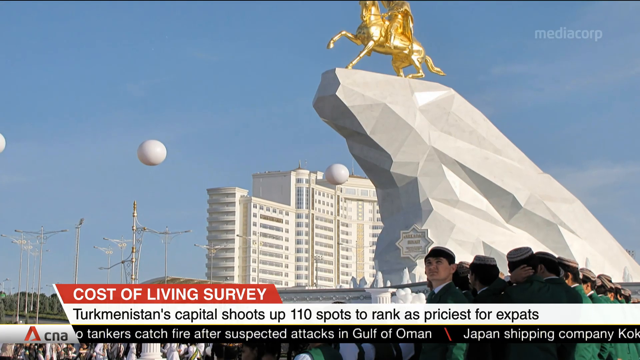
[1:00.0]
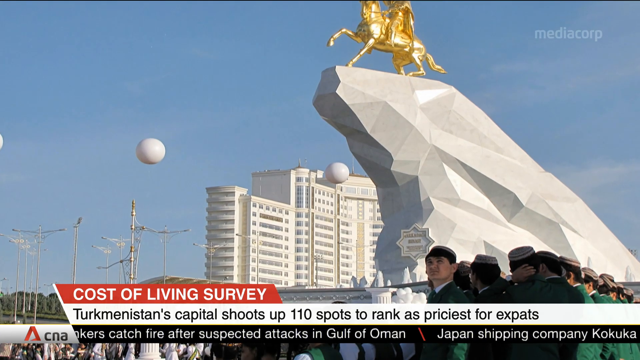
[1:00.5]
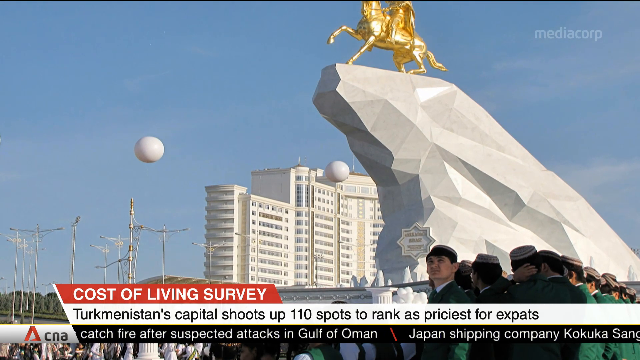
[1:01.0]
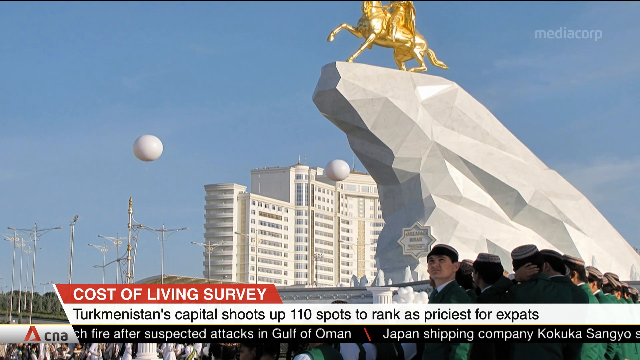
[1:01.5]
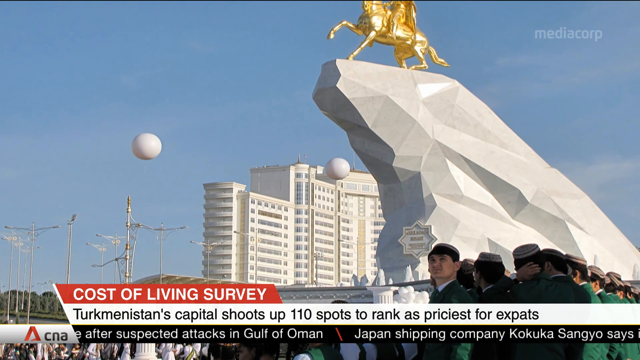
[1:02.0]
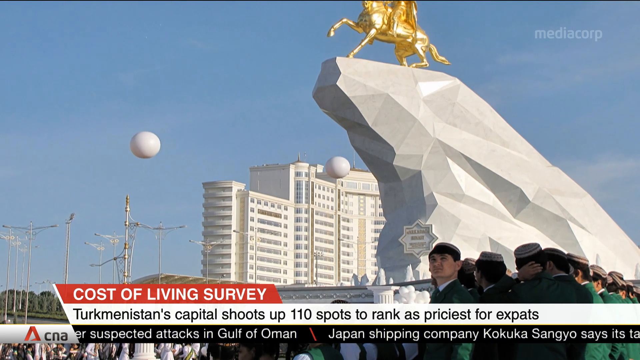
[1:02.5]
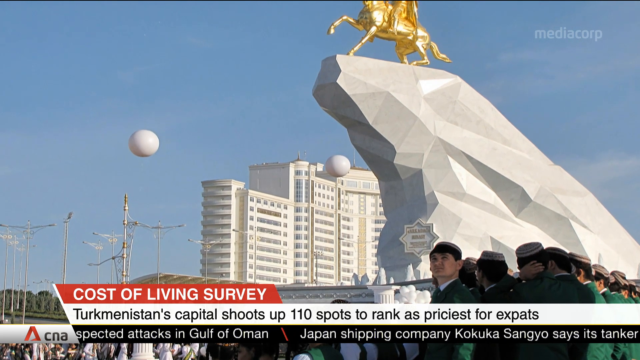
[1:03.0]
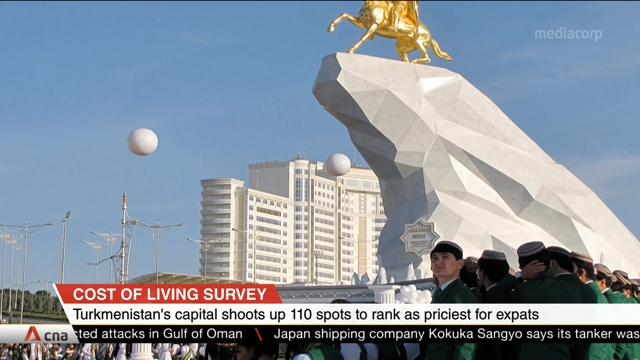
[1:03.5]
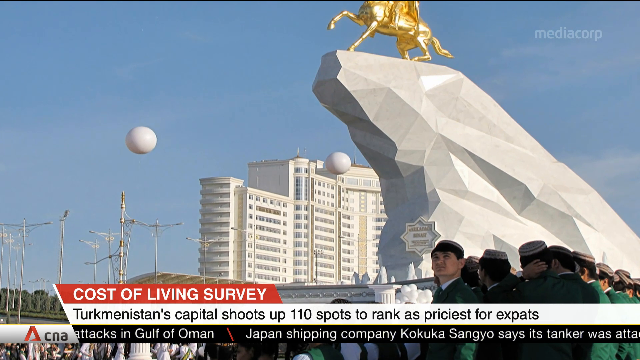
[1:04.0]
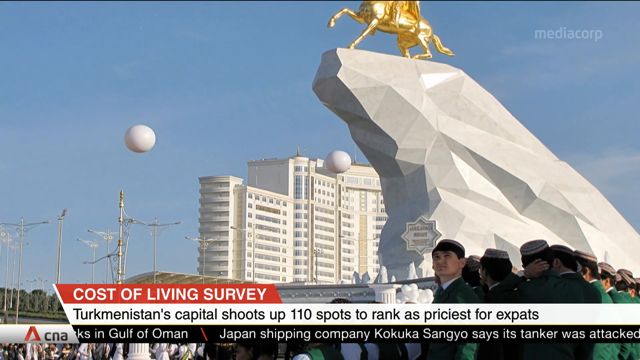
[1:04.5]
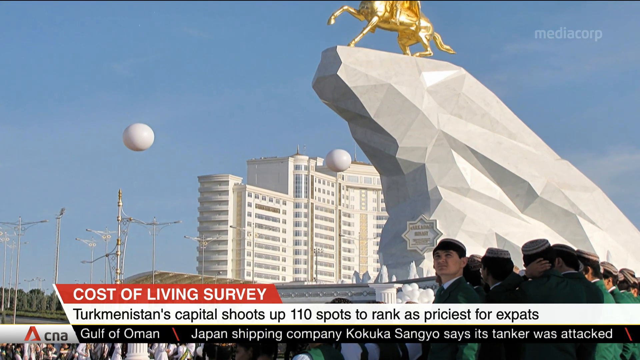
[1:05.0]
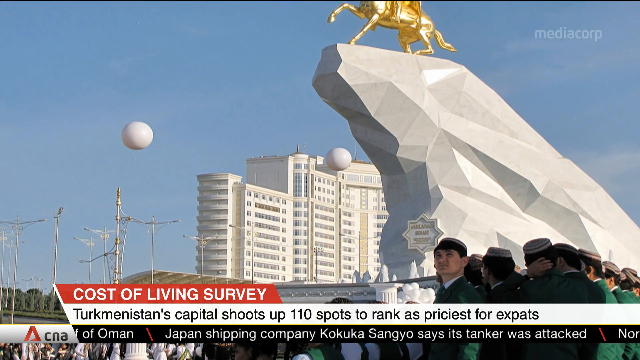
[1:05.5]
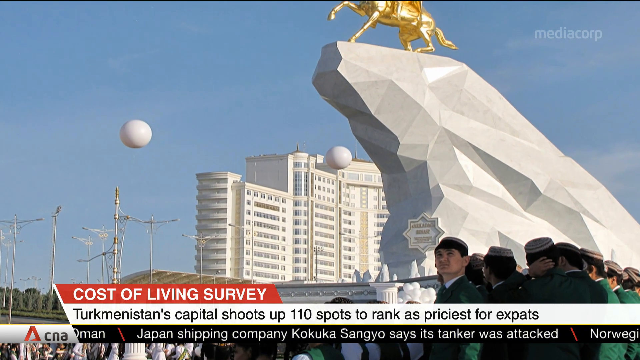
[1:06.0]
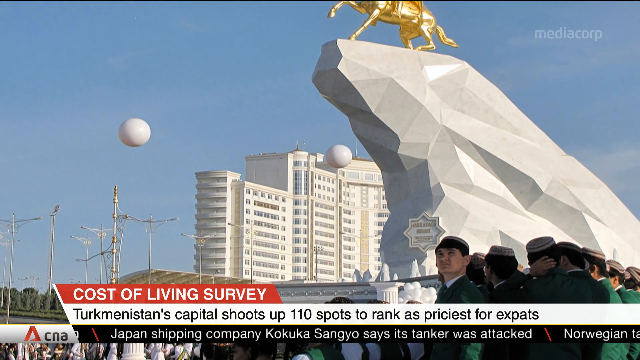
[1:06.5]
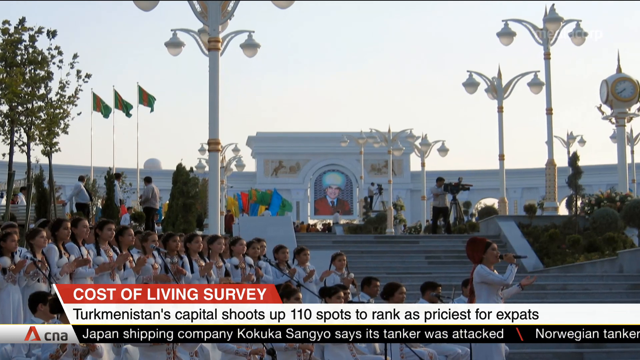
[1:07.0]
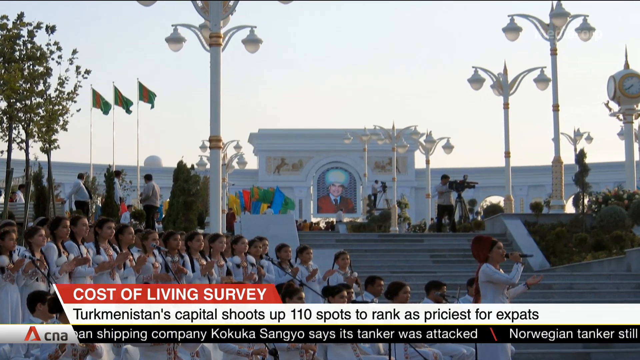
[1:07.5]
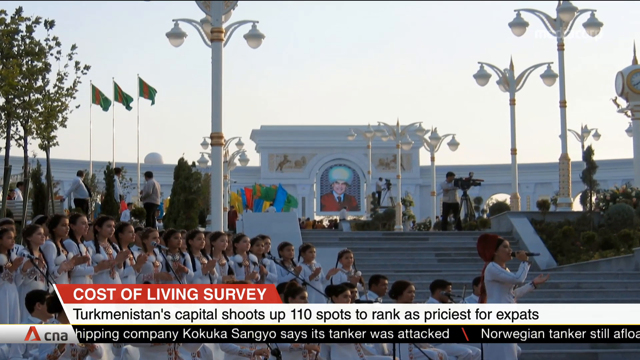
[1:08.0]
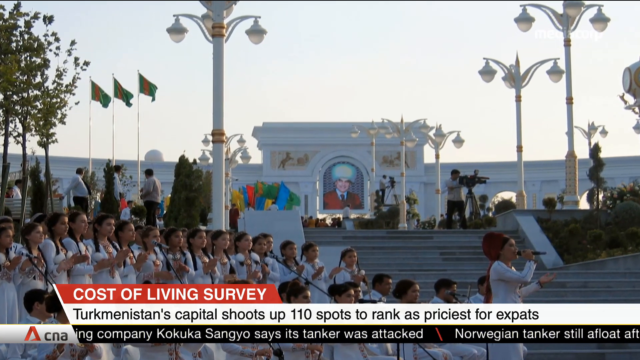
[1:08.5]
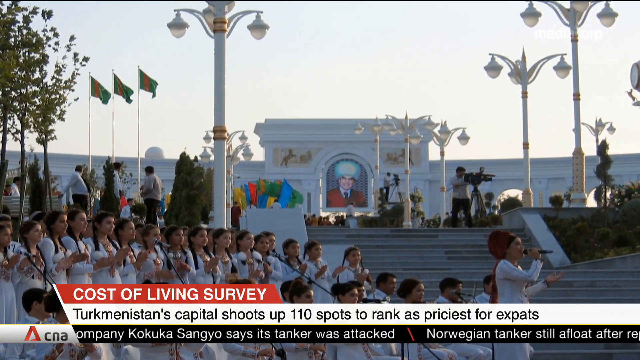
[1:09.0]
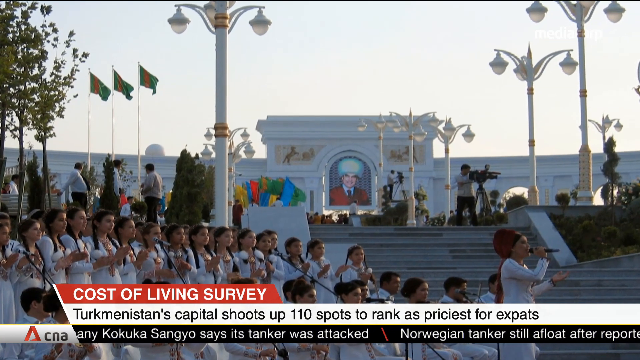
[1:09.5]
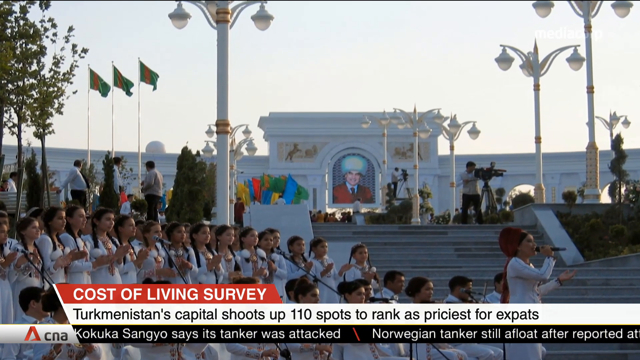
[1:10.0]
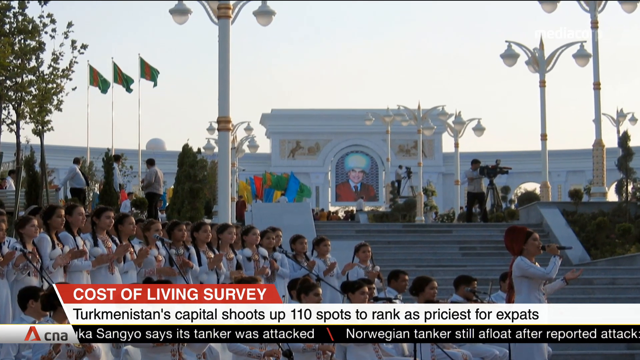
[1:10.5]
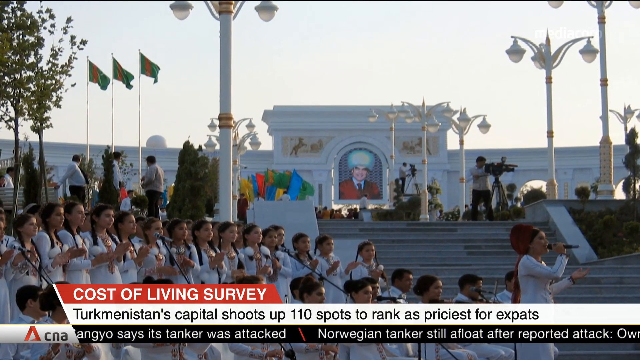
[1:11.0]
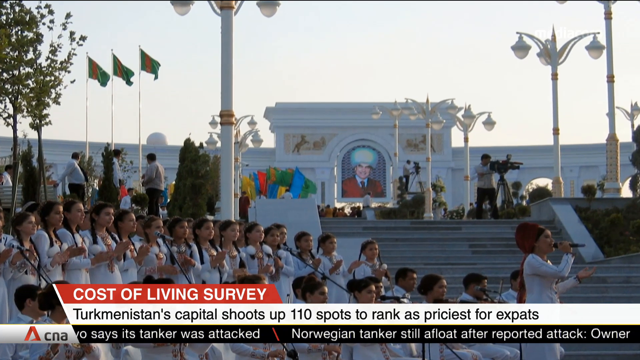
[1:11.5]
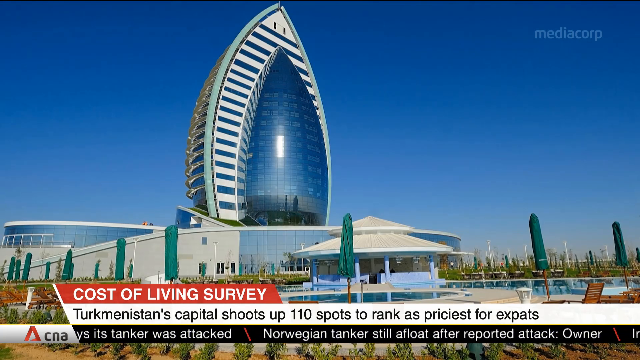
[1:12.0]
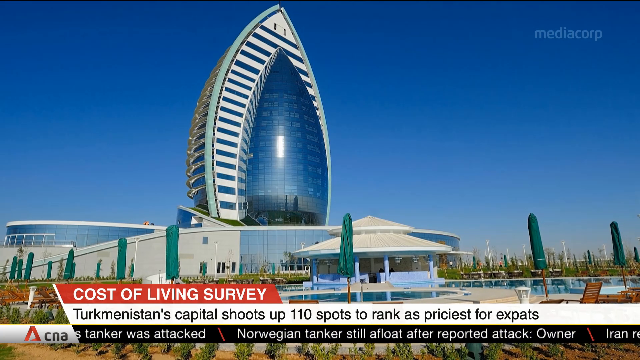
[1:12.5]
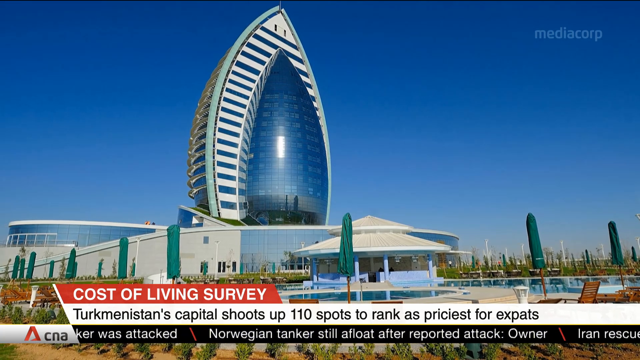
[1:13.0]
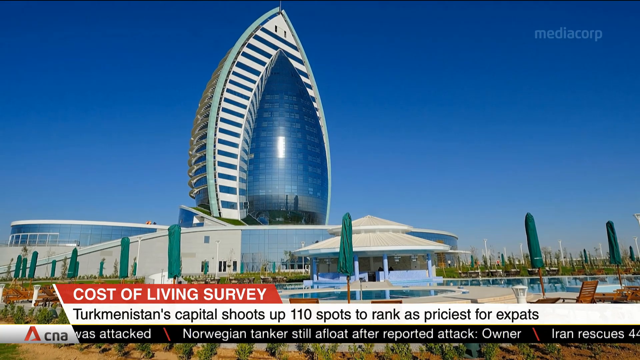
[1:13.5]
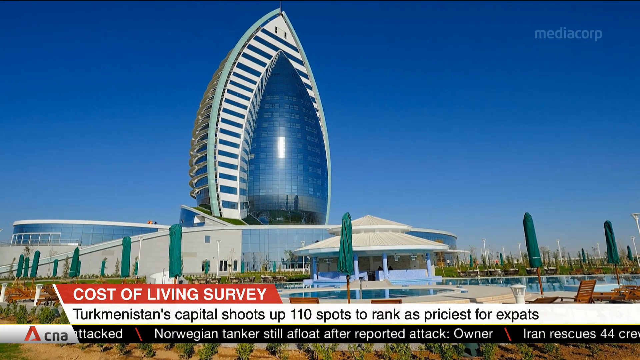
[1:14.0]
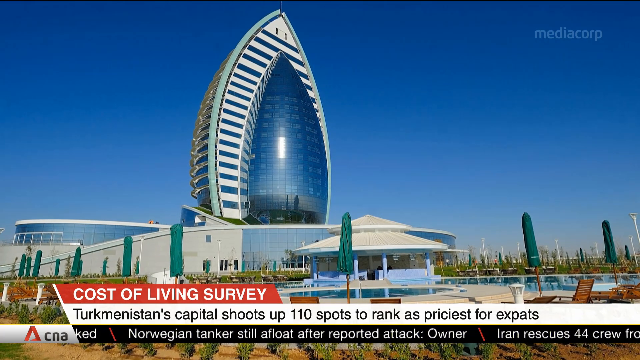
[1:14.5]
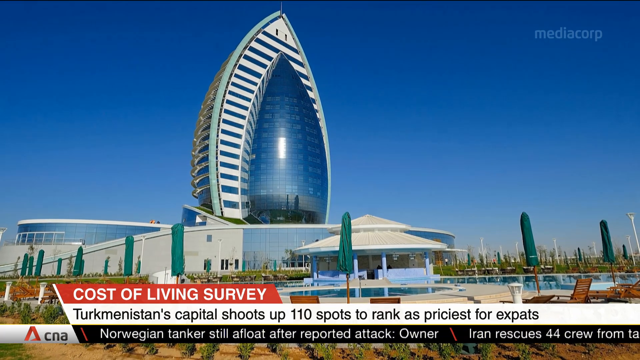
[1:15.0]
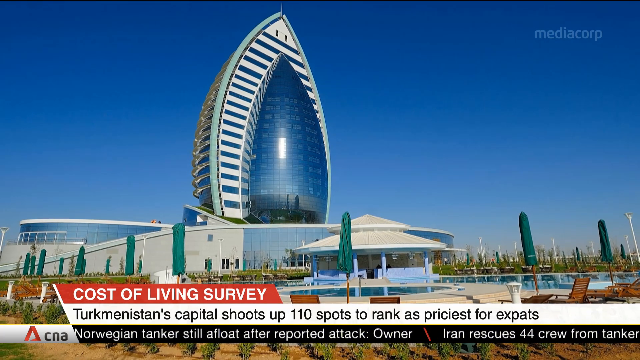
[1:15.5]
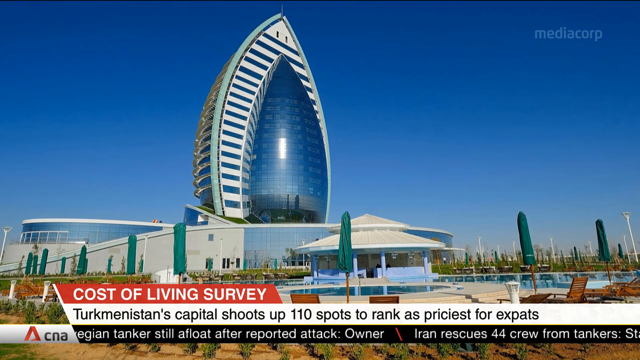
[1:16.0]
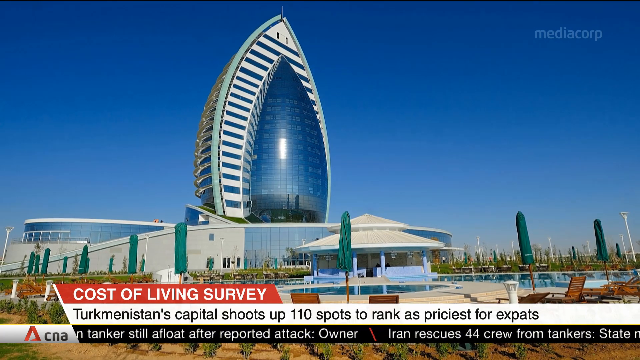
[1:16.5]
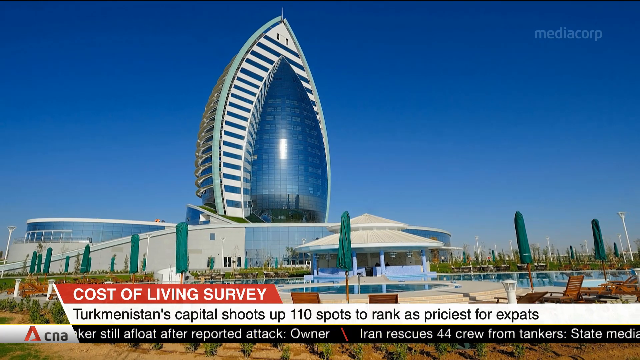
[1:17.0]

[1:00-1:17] The camera zooms in on a tall white building with a sculpture on it that looks like a running animal, apparently a horse. People wearing green stand on the ground. Kids dressed in white appear; one seems to be leading and singing, while the rest also hold mics and sing. As the camera zooms in, a picture that looks like a president or leader is shown on a very tall building. The camera then shifts to a tall building and blue flags being raised, while the headline about the "Tekinstan capital shoots up 110 spots" remains. "Media Corp" is written in the corner.